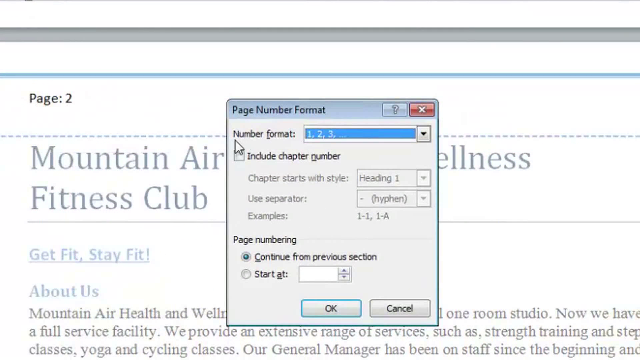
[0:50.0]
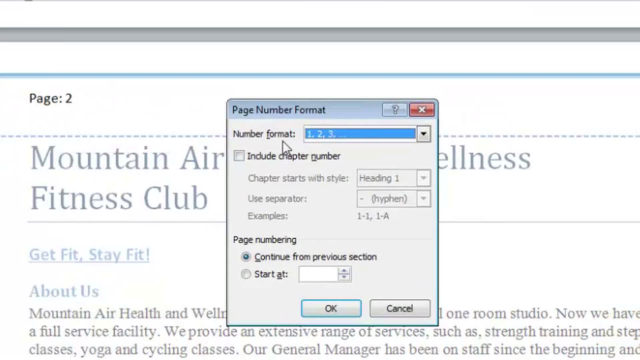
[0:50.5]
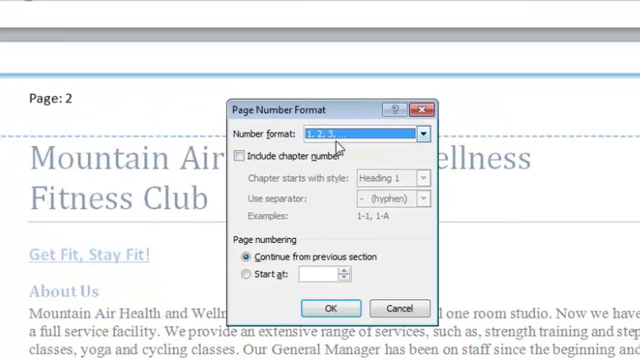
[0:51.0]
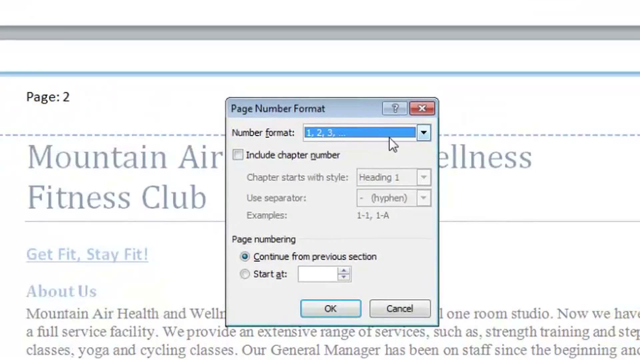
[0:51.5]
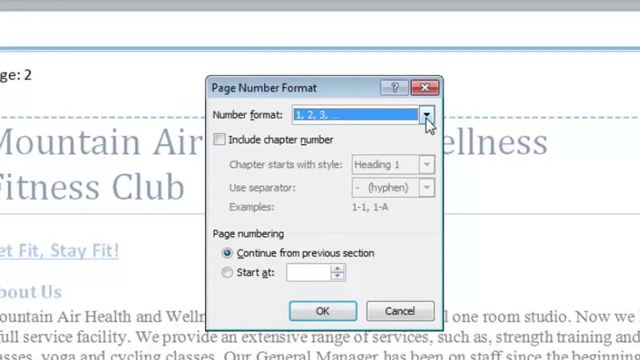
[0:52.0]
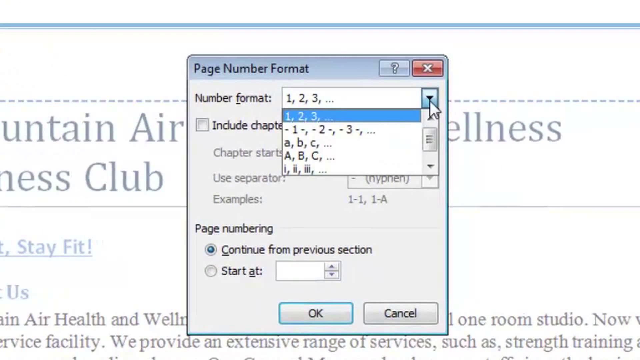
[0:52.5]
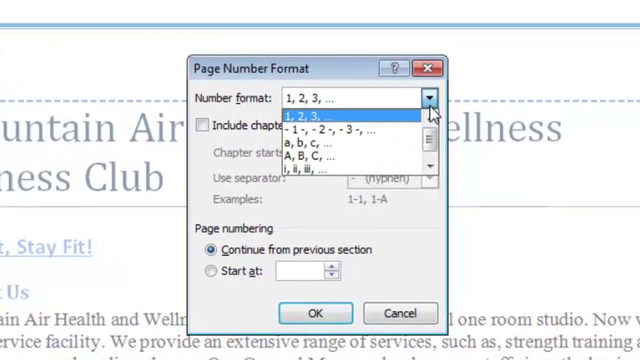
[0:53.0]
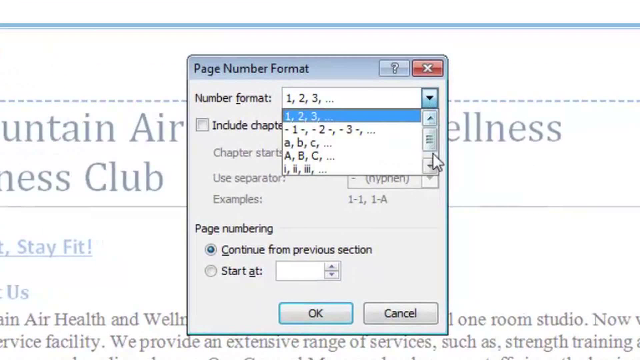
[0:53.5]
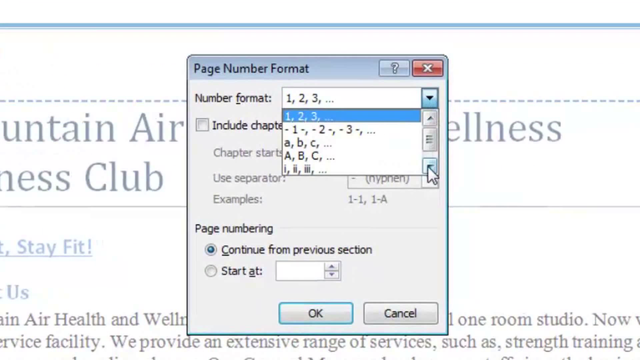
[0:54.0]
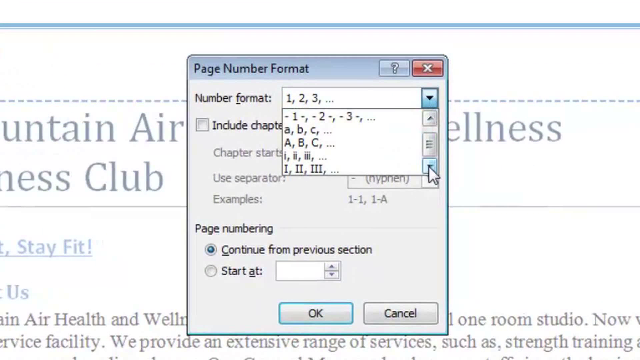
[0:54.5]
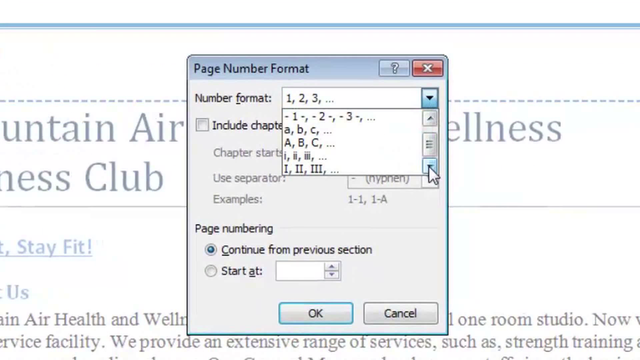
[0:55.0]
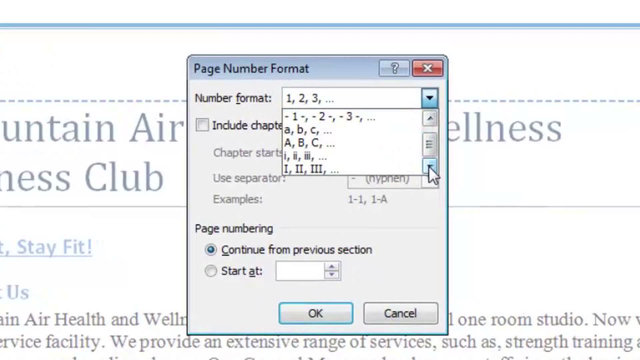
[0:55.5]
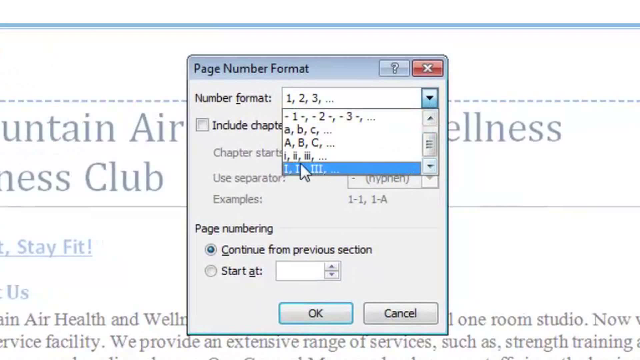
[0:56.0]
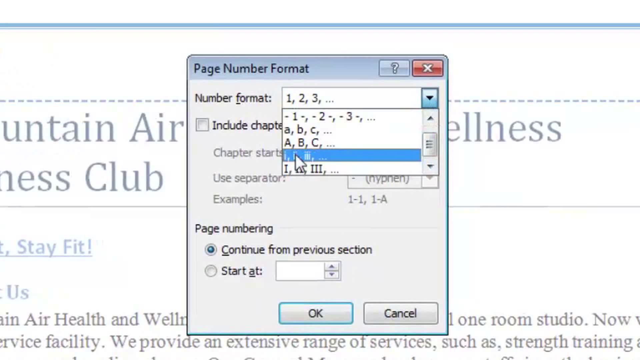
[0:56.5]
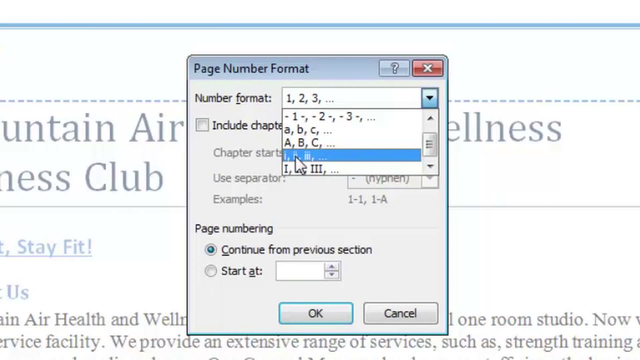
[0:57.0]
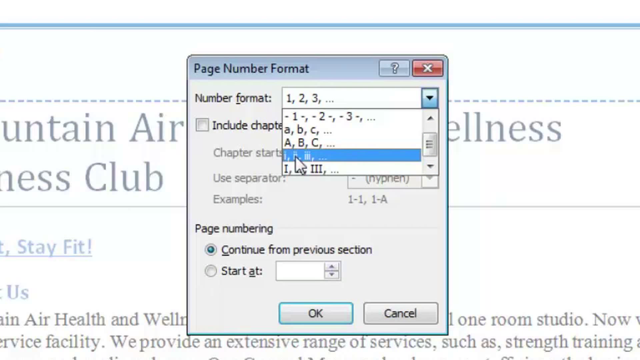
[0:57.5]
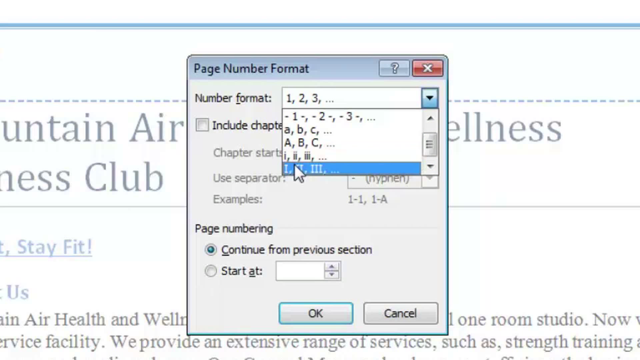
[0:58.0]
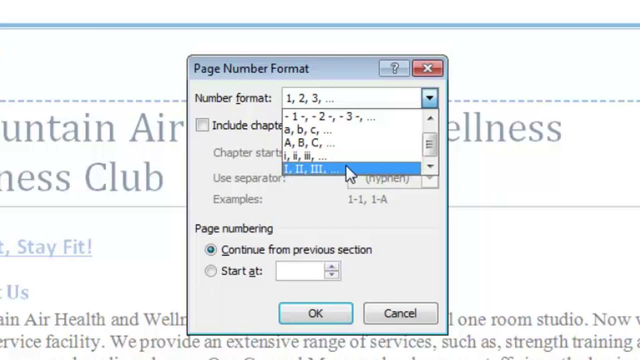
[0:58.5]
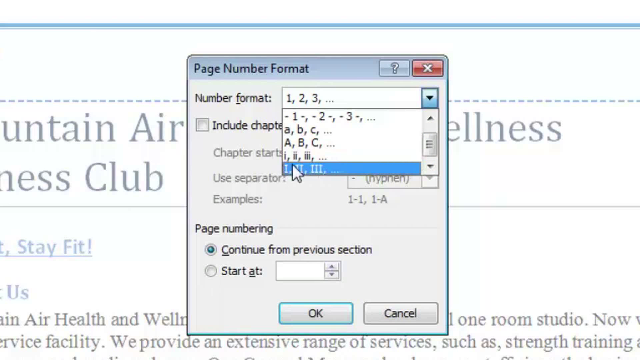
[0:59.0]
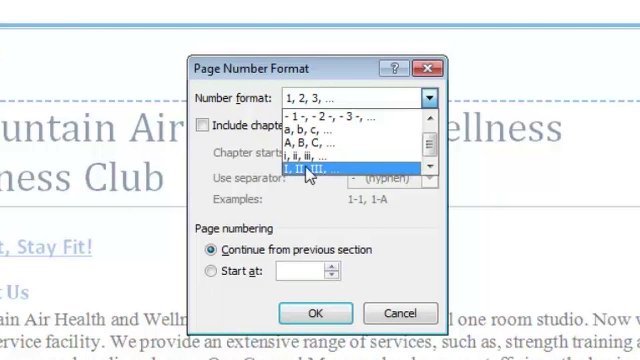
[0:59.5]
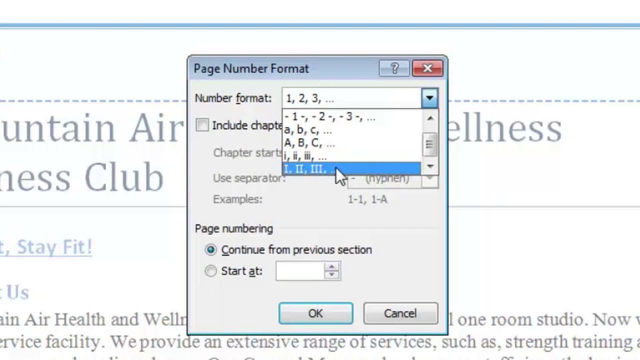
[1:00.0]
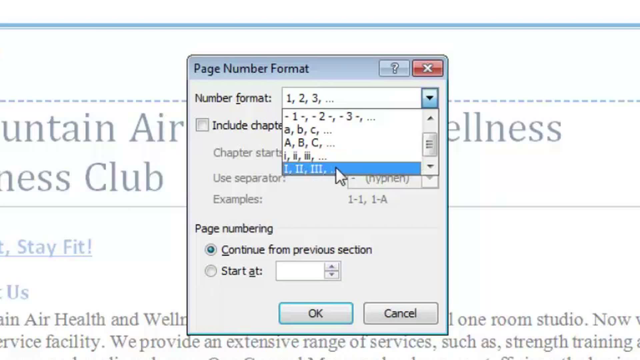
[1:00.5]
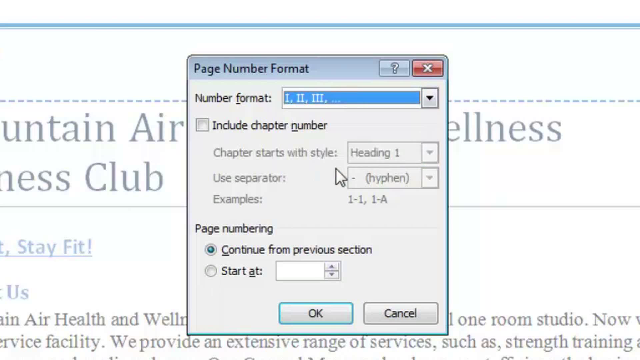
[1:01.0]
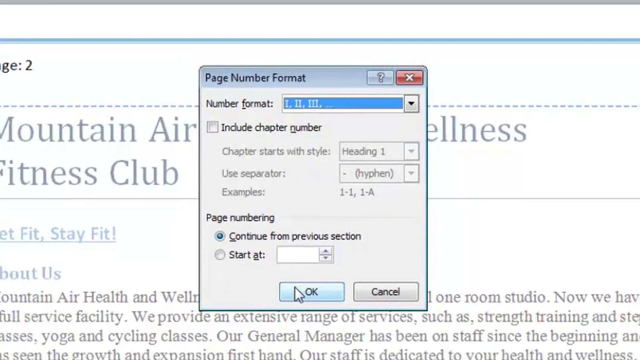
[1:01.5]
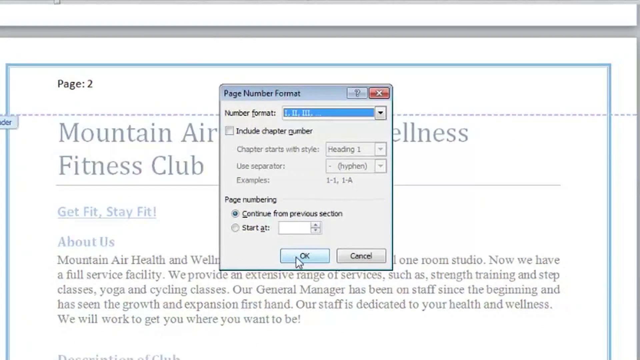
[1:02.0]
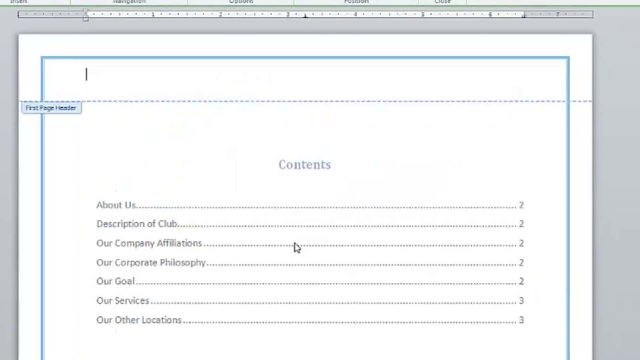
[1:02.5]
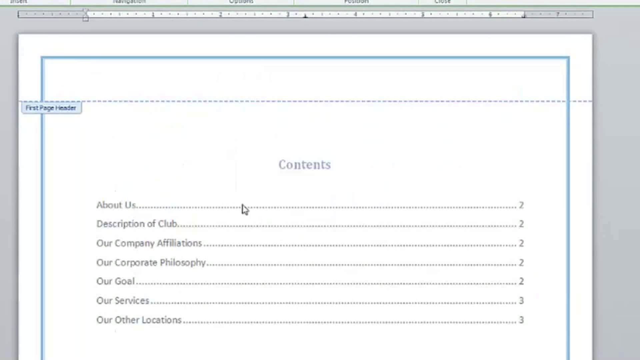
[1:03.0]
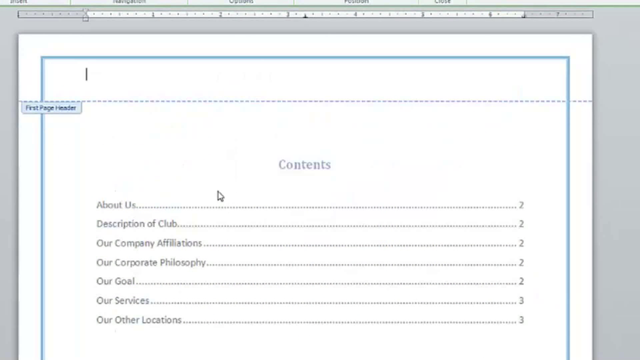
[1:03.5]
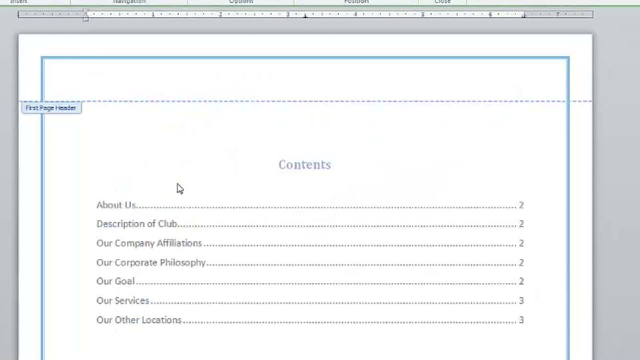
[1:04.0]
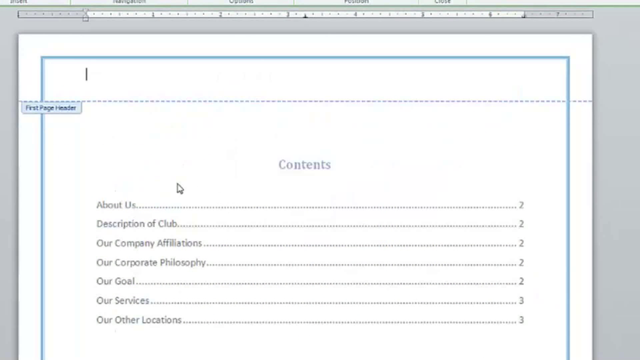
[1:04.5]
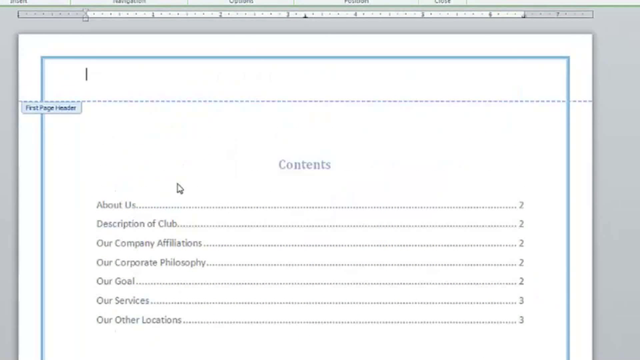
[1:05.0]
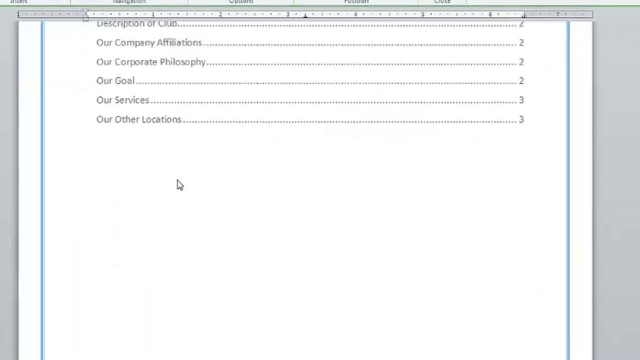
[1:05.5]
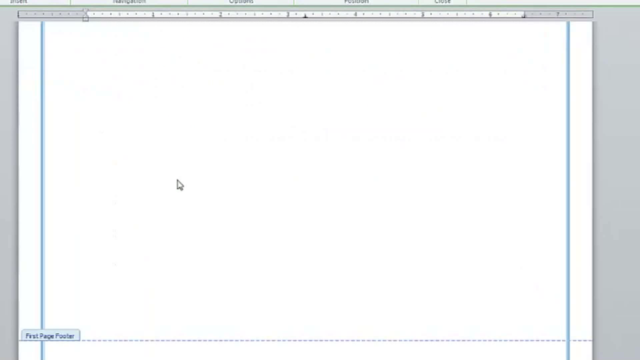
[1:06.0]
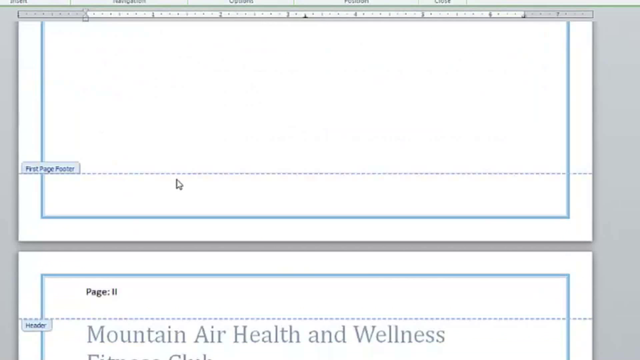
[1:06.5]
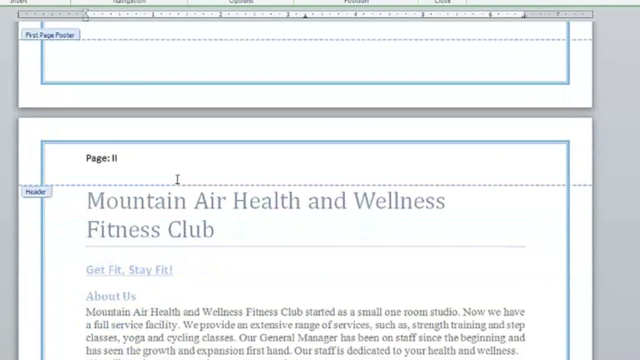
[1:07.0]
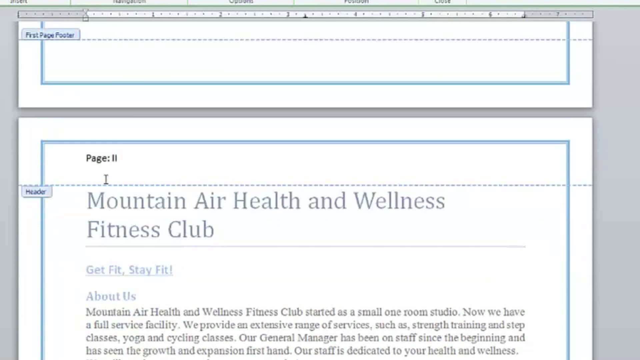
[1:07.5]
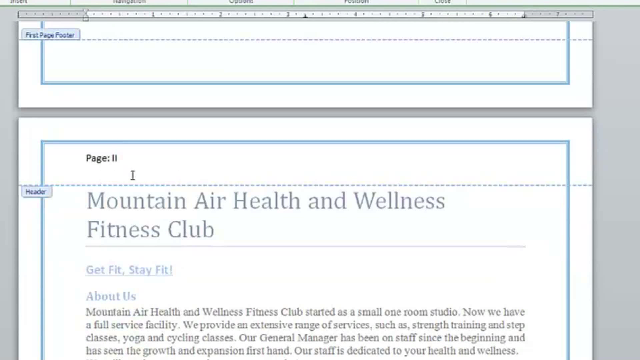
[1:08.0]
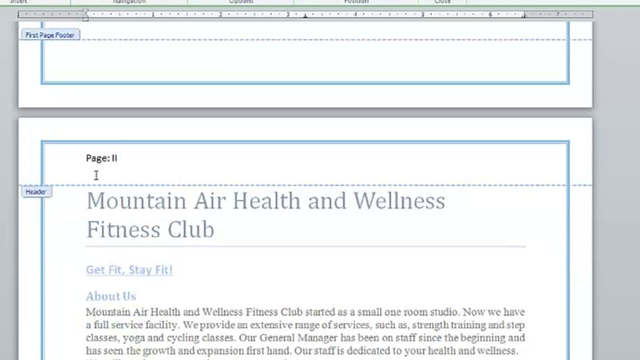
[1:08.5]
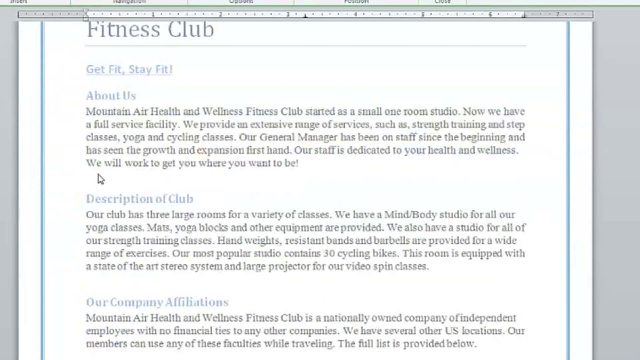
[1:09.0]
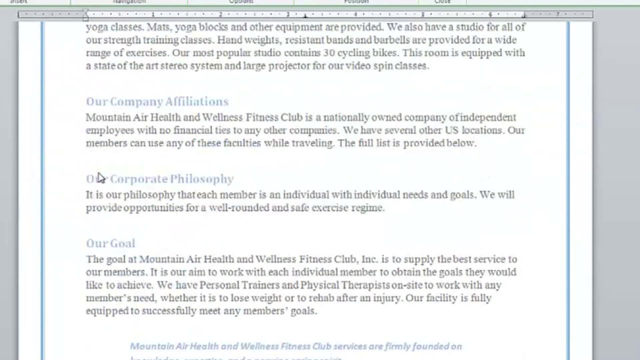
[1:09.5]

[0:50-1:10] The Word document is open in the editor section of a Word program on a computer monitor. The option to edit the page numbers has been opened, and a pop-up box titled "page number format" appears. The mouse pointer moves to the drop-down arrow next to number format and clicks it, then scrolls down to the very bottom, highlighting the different number formats available for the page numbers. In the end the page numbers change: page two is now shown with a Roman numeral two instead of the regular number two.